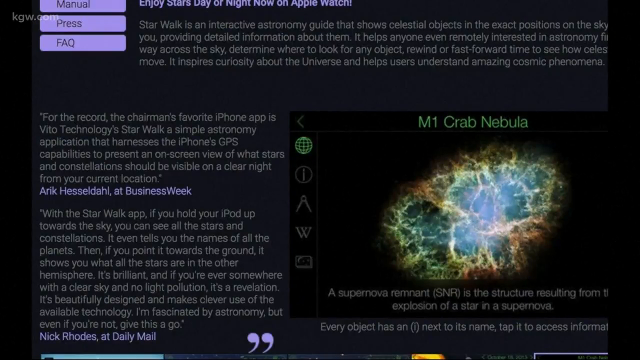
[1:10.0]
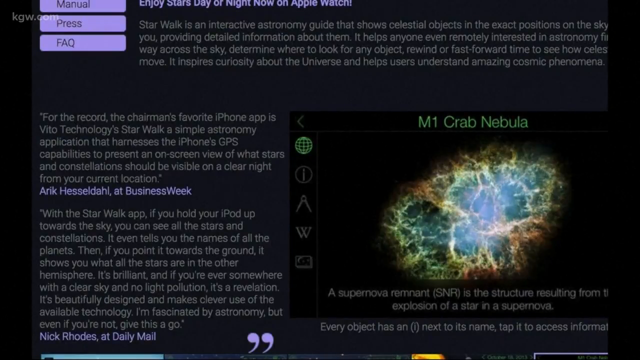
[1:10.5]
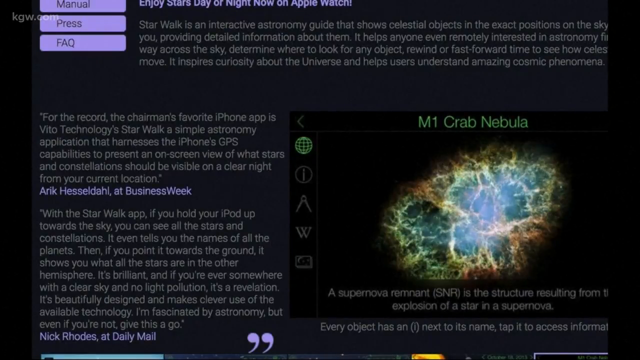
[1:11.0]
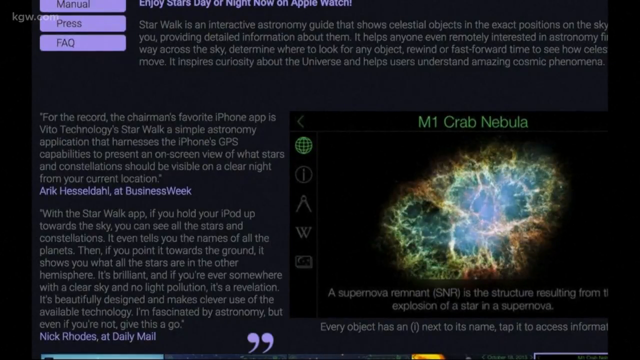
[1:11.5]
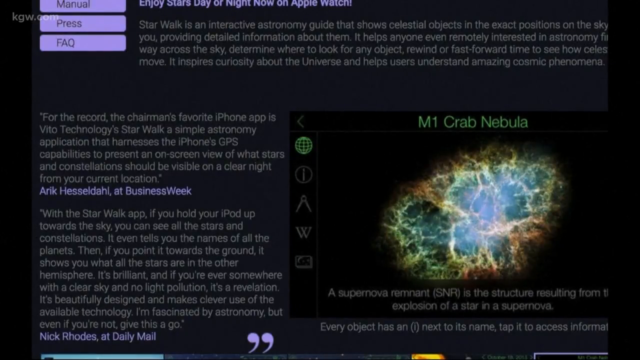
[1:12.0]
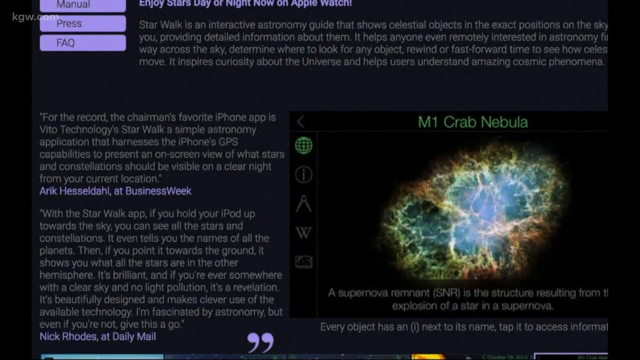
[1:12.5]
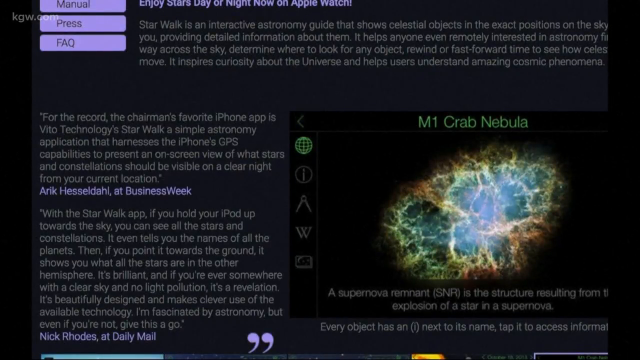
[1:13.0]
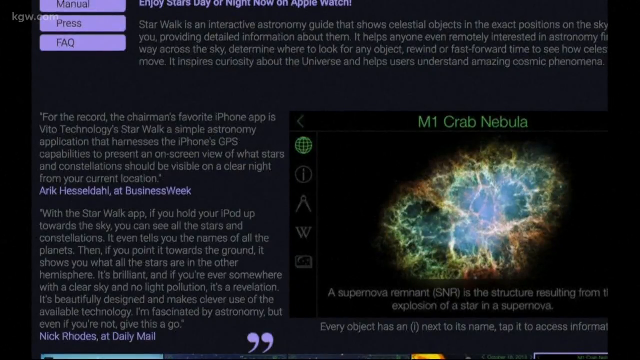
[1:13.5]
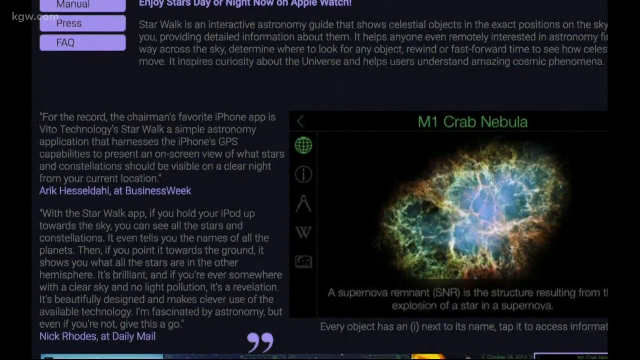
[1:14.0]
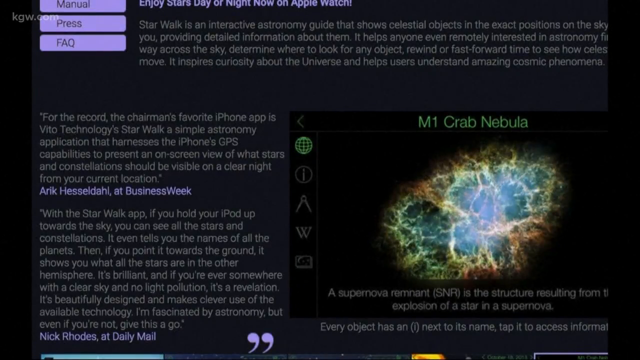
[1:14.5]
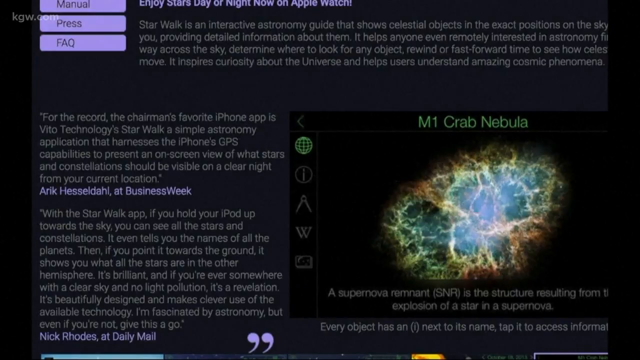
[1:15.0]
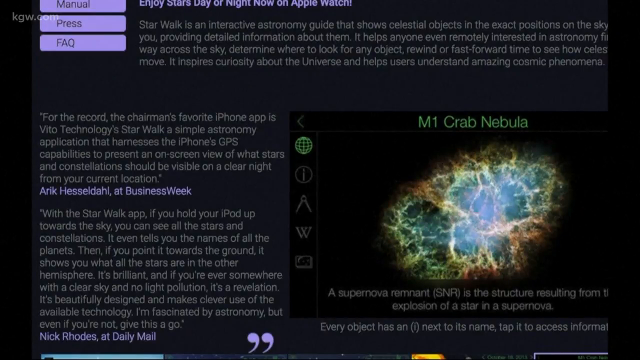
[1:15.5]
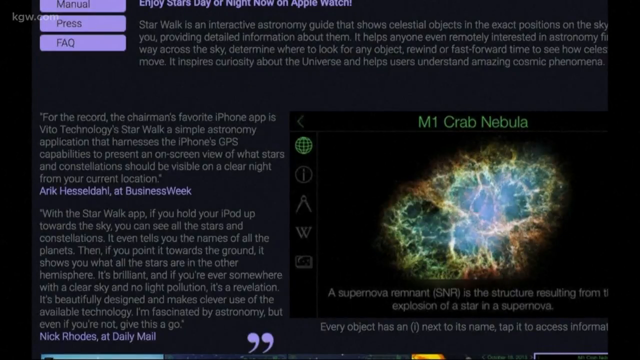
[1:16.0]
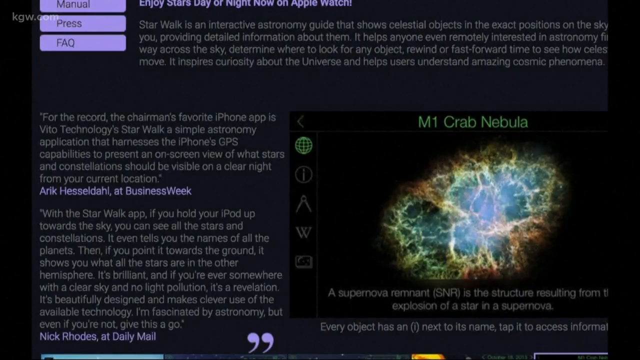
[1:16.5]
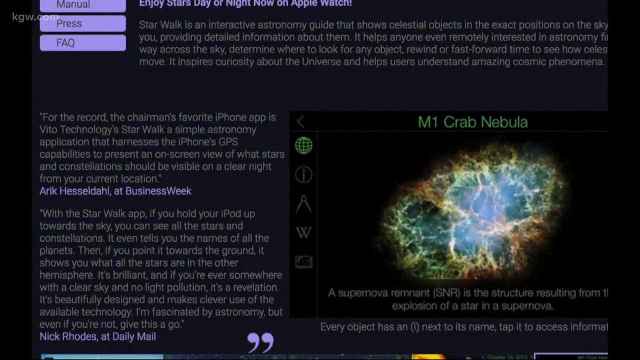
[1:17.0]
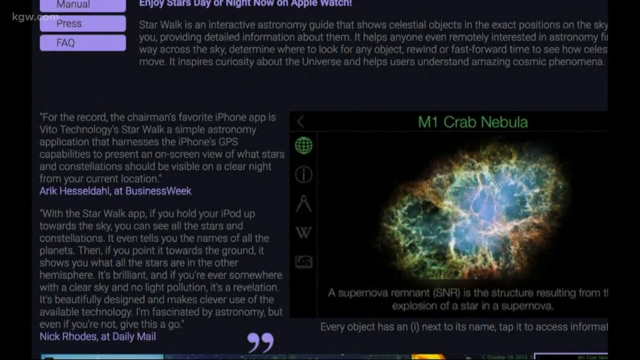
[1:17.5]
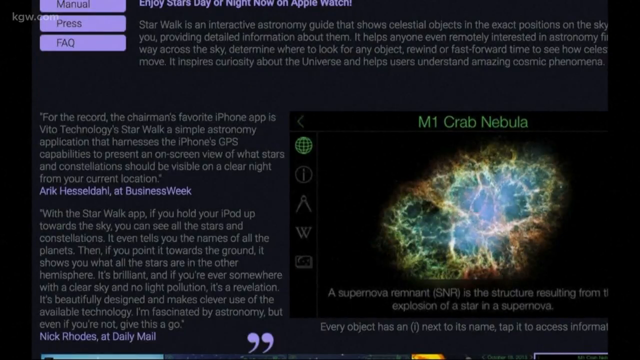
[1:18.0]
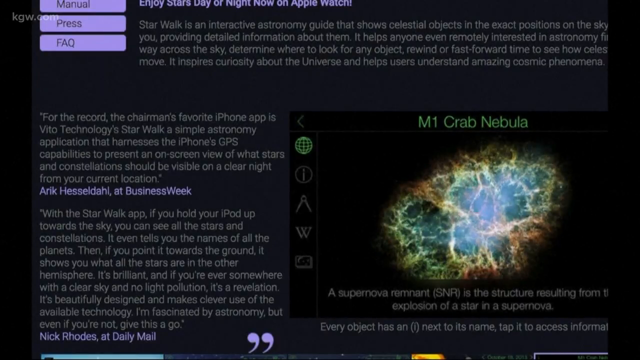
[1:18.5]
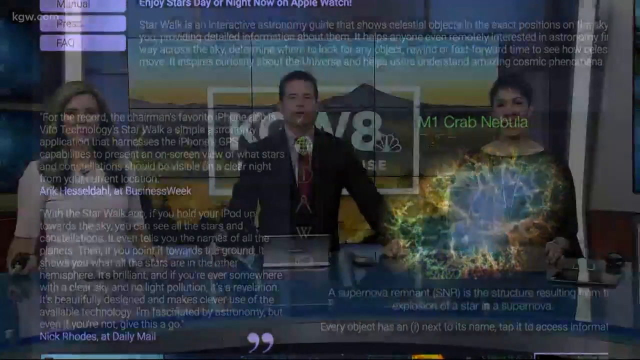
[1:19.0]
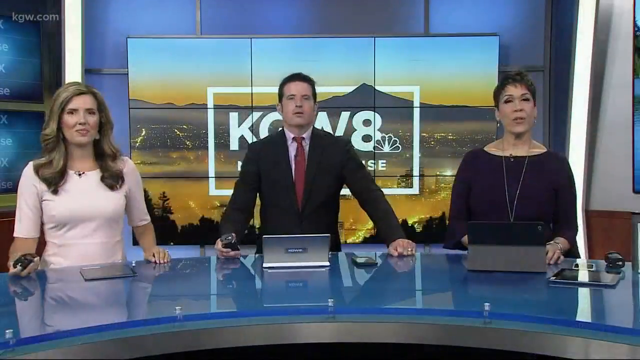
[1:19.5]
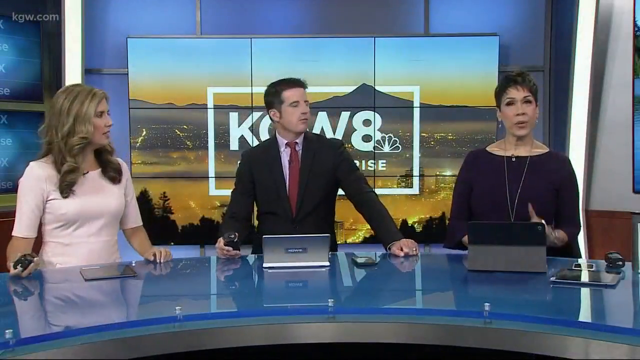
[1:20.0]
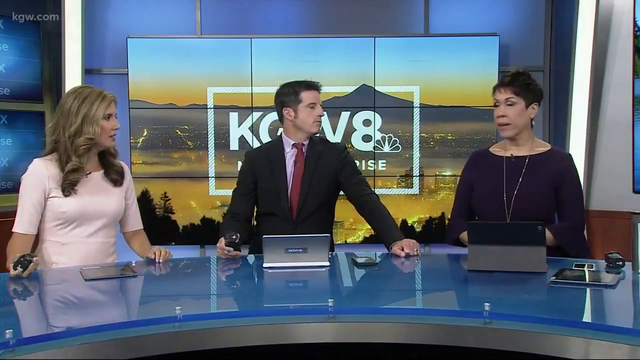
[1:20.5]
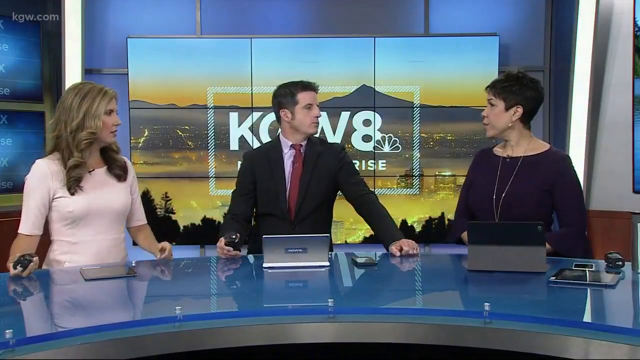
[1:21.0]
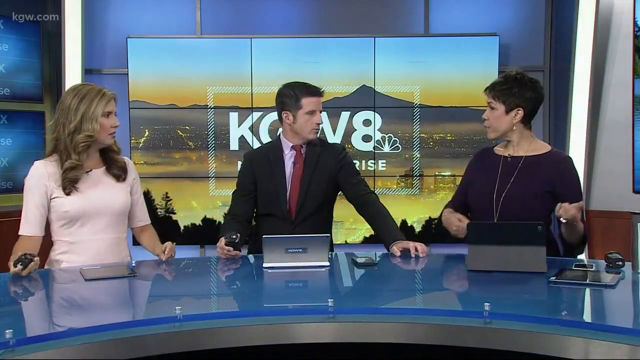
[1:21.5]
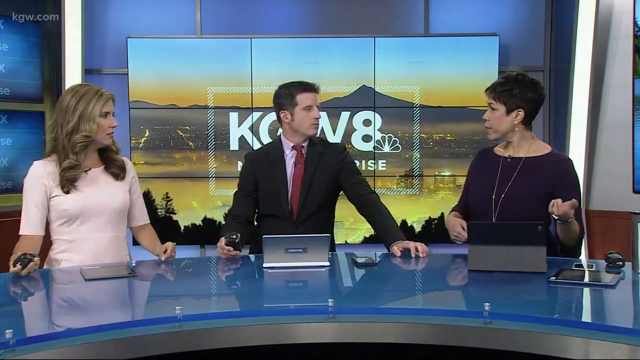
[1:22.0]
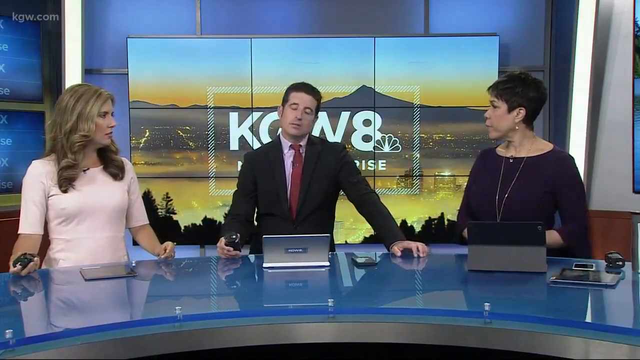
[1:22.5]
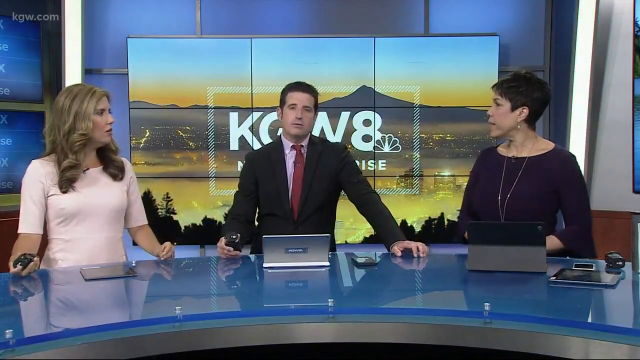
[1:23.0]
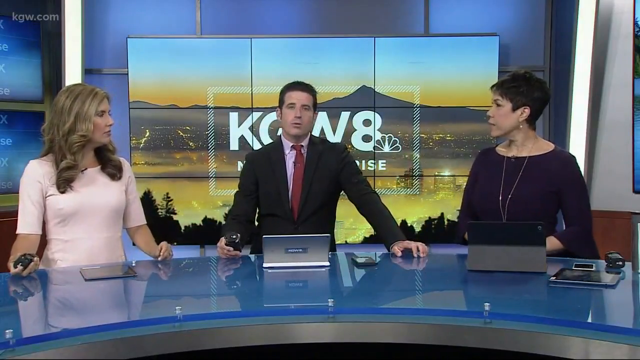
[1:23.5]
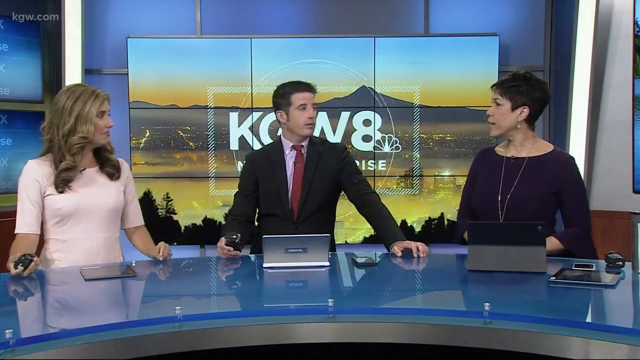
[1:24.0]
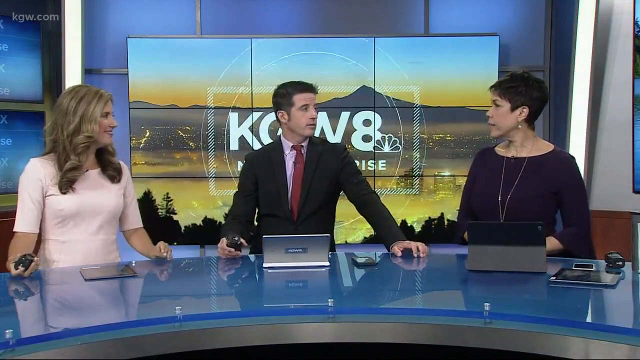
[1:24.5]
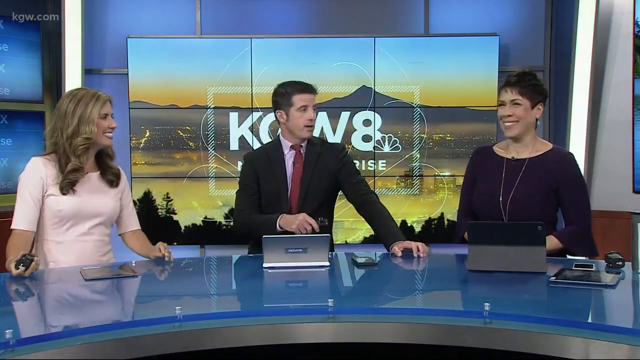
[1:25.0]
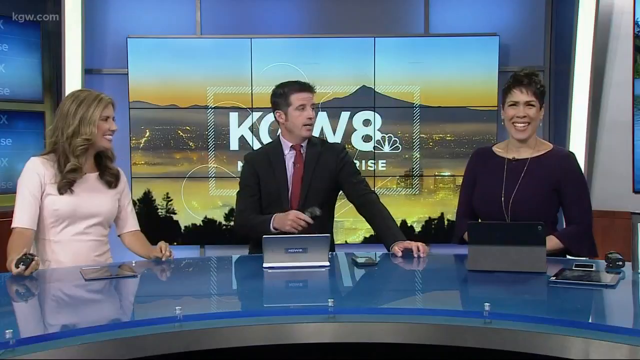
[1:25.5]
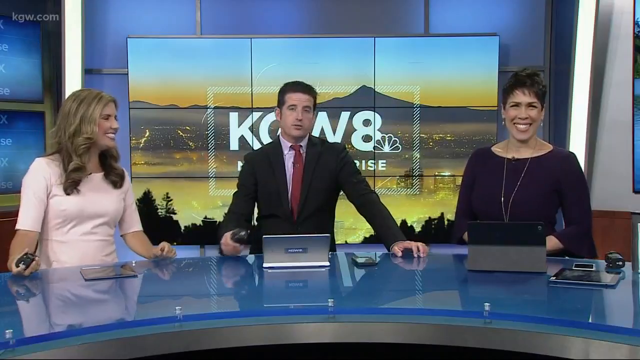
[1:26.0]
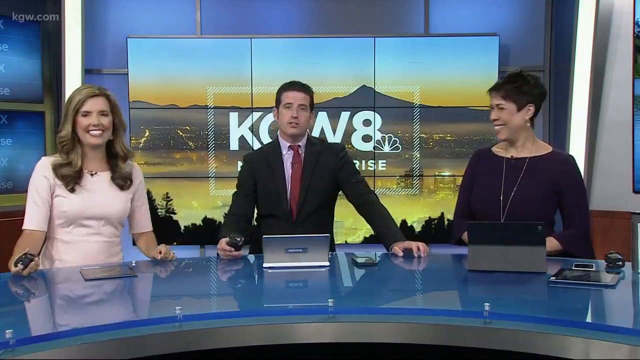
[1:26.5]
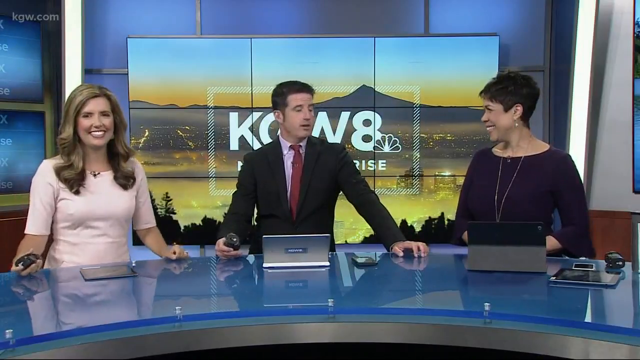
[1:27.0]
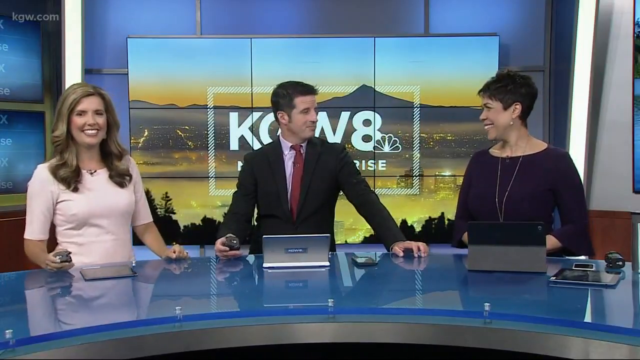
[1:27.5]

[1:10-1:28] Another page full of text fills the top and left of the screen. On the bottom right is a square that just protrudes into the top right of the screen. At the top of the square is "M1 Crab Nebula", and below it is some sort of celestial graphic with a bright blue center and lots of colored lines across it, kind of like a very uneven rock face with light shone on it. Below the image is the text "a supernova remnant (SNR) is the structure resulting from the explosion of a star in a supernova", with further text below that. The video then goes back to a studio, where a man is in the center, kind of centered on a screen in the background behind him that shows "KGW8"; part of it is obscured by him, leaving the letter K, the arc of the G and the second half of the W visible. He looks to his left toward the woman on the right of the screen, who appeared earlier. She wears a blue round-neck dress with a chain forming a V down the front, has short hair, and looks to the right toward the man in the center. To the left is another woman with longer blonde hair, wearing a short-sleeved, light-colored round-neck dress. They are around an arced table, each with a device of some sort in front of them: he has a laptop, the woman on the right also has a laptop, and the woman on the left appears to have a tablet. The table looks like it has a circular arc that curves toward them from the bottom corners of the screen, and its reflective surface shows reflections, most prominently of his laptop lid.